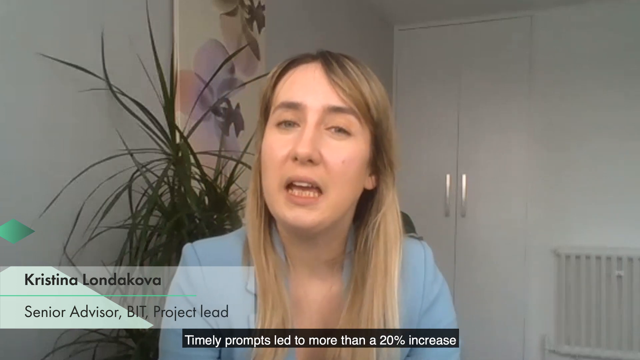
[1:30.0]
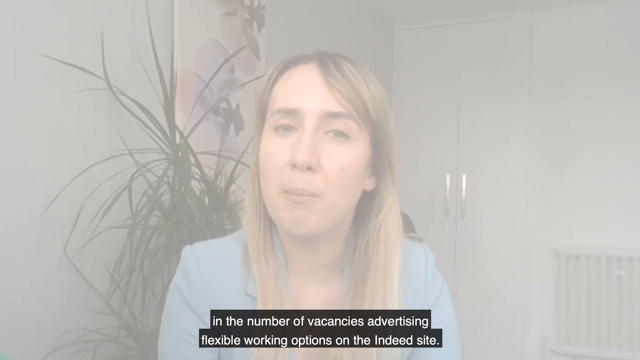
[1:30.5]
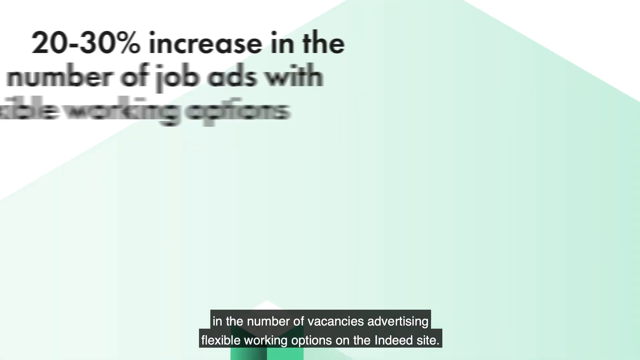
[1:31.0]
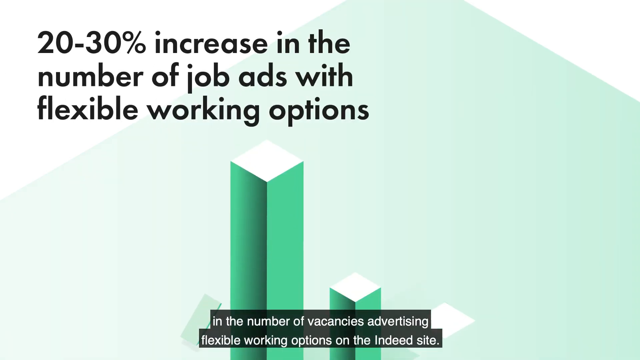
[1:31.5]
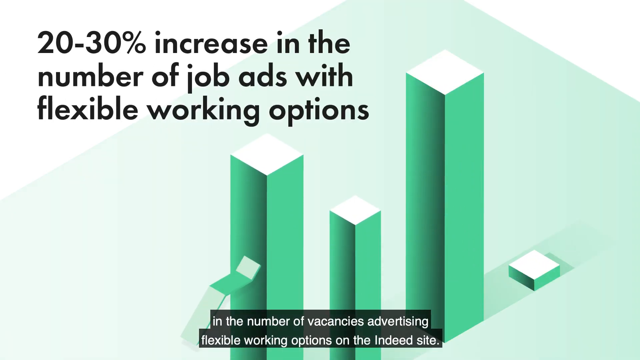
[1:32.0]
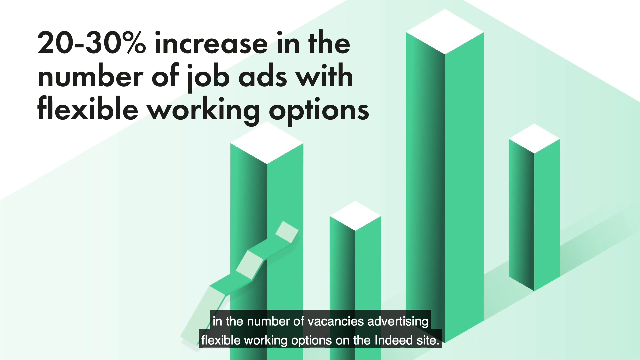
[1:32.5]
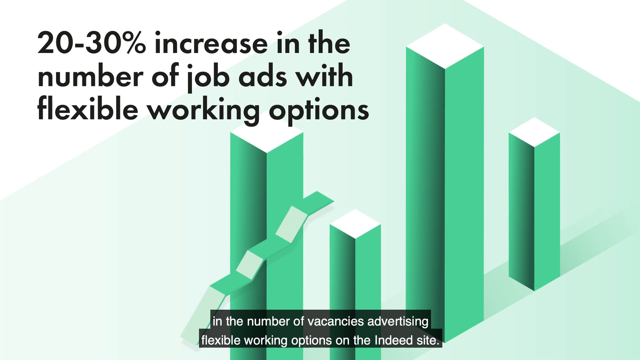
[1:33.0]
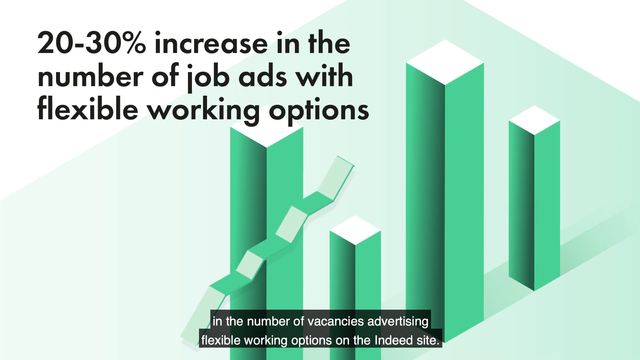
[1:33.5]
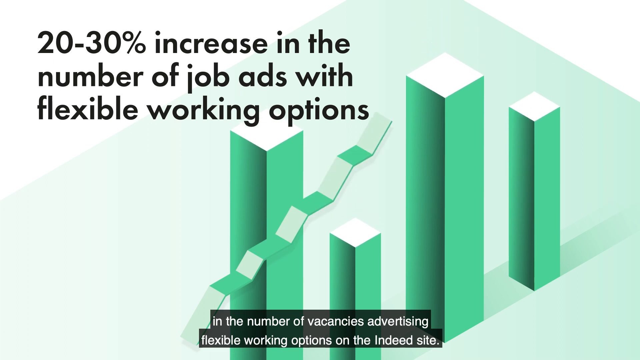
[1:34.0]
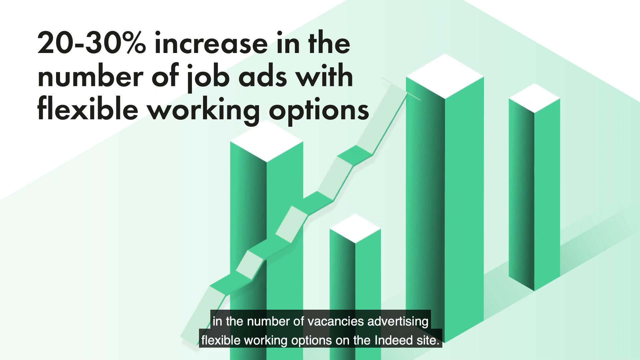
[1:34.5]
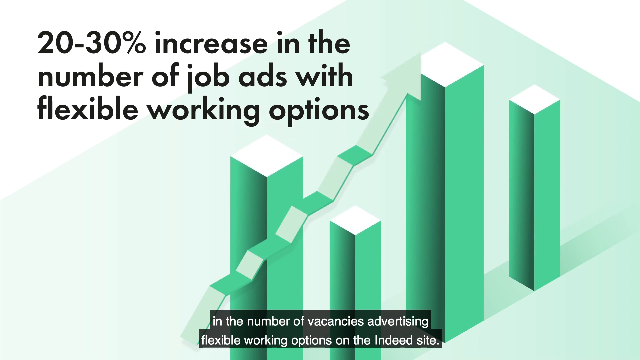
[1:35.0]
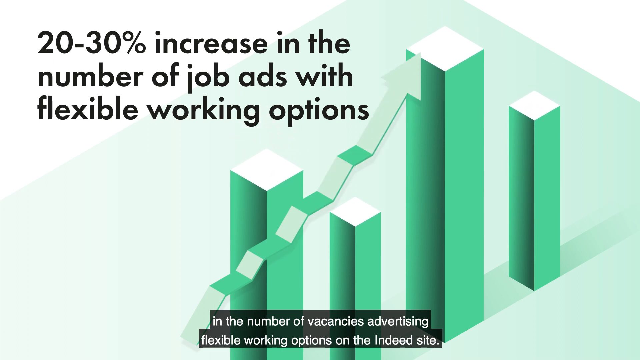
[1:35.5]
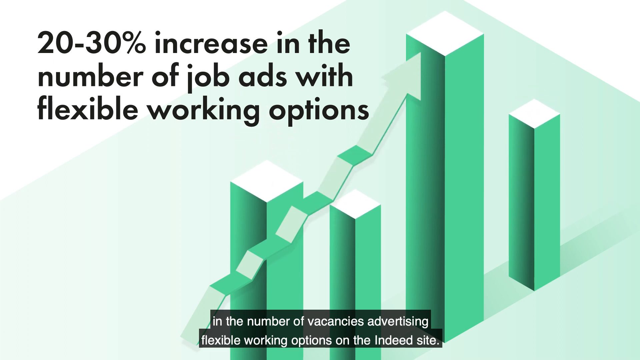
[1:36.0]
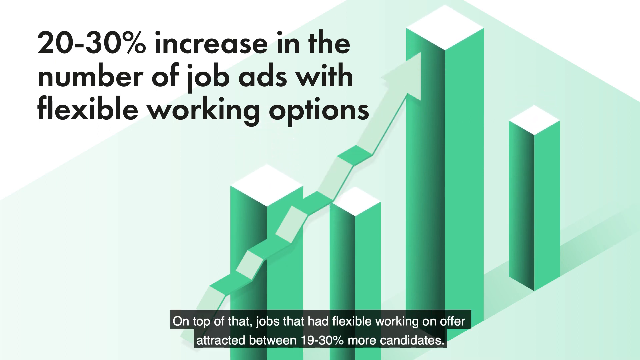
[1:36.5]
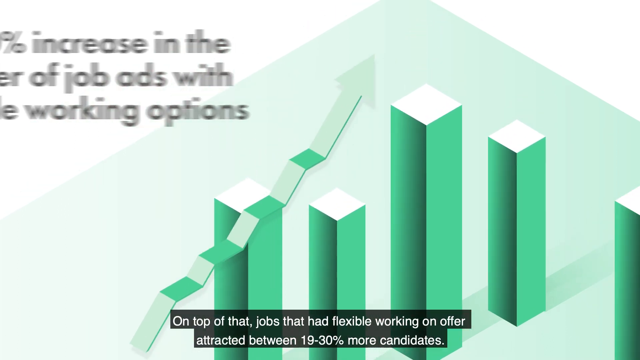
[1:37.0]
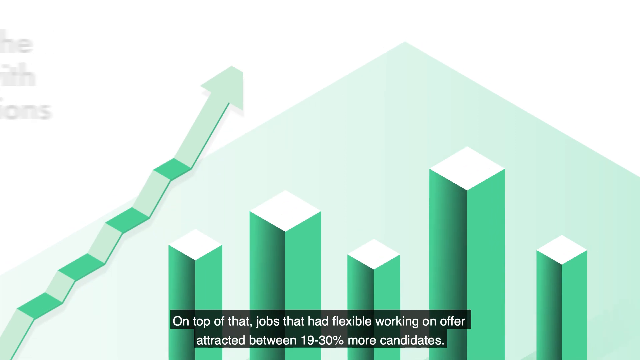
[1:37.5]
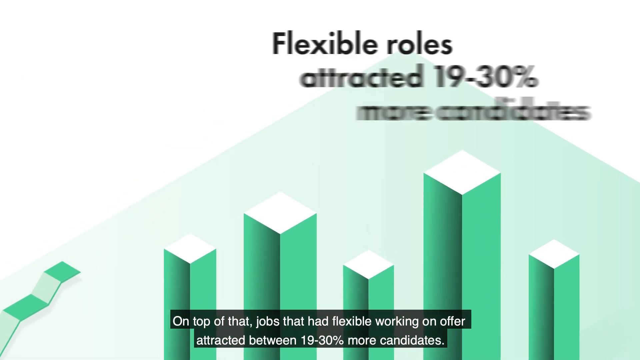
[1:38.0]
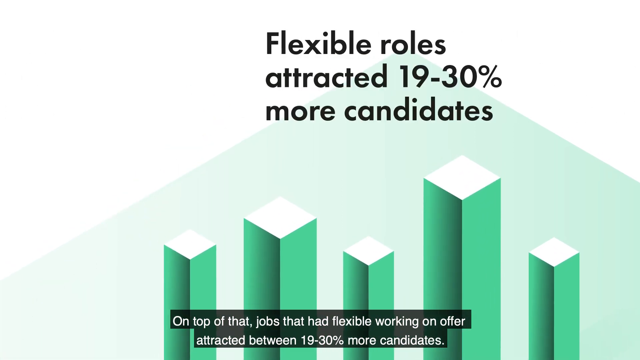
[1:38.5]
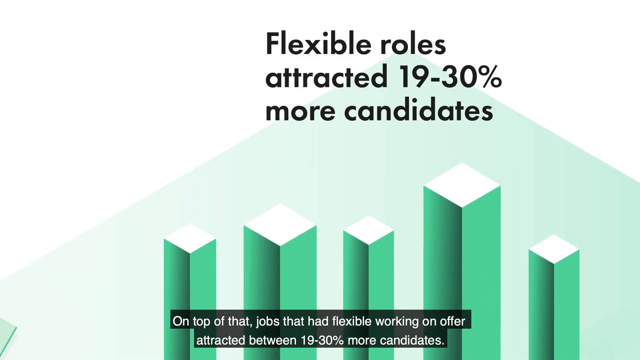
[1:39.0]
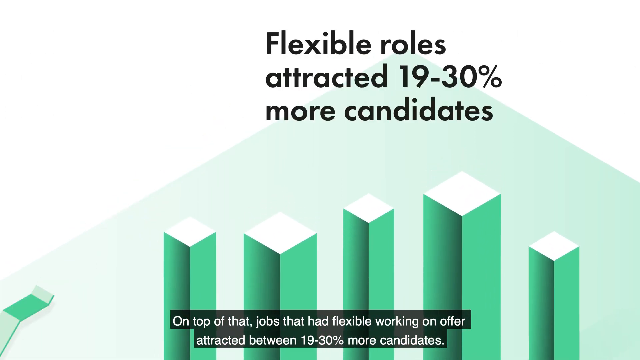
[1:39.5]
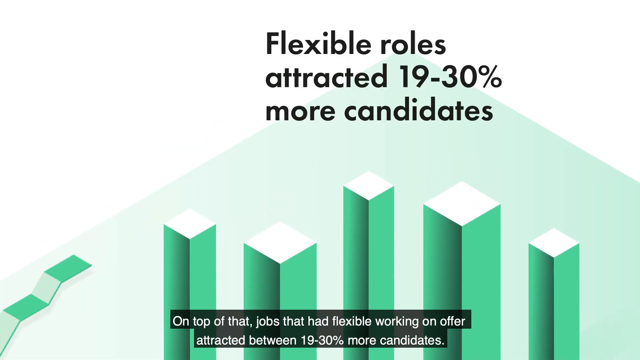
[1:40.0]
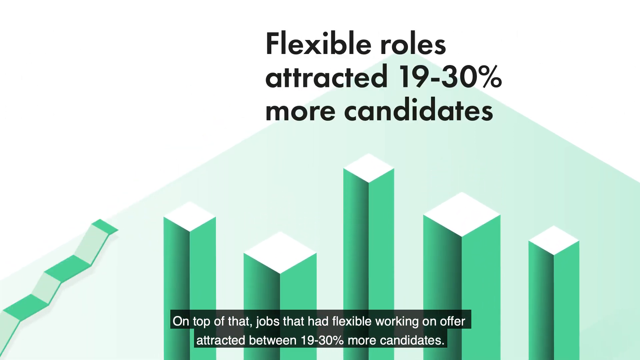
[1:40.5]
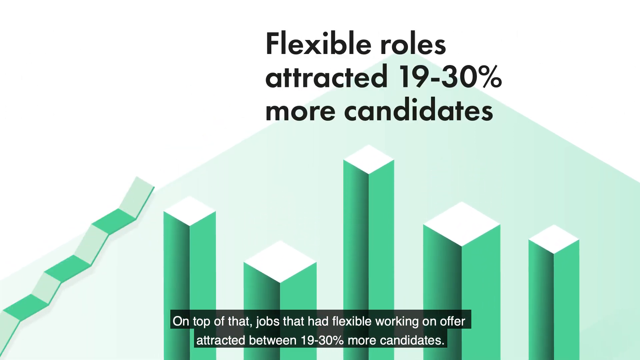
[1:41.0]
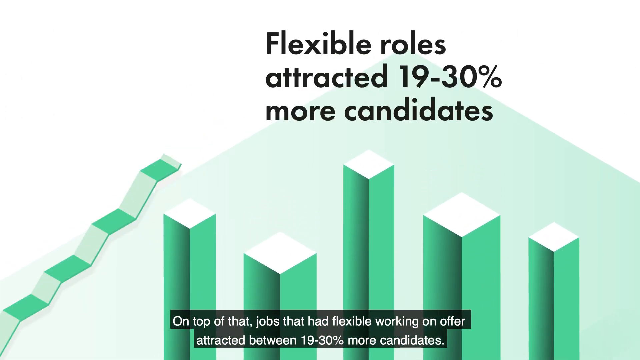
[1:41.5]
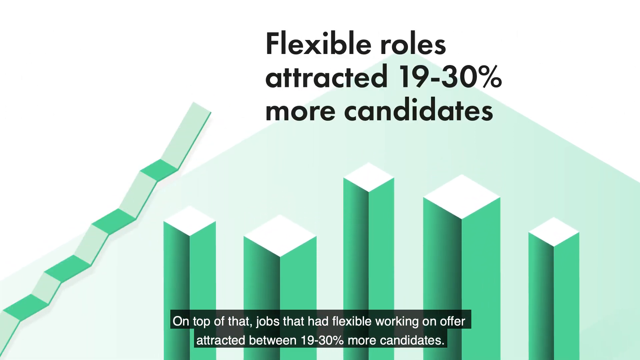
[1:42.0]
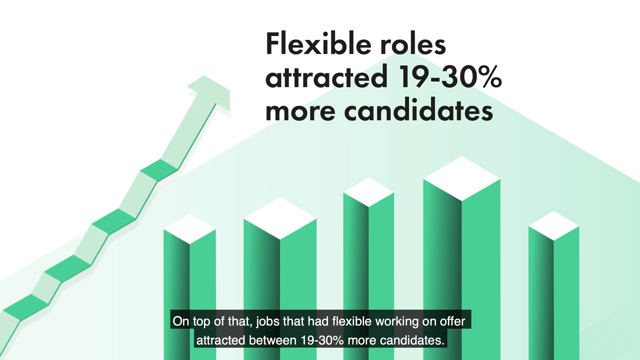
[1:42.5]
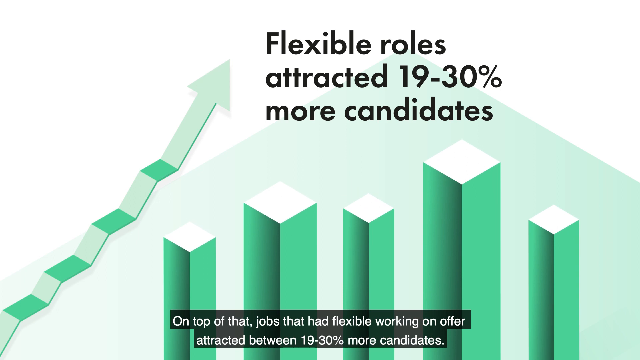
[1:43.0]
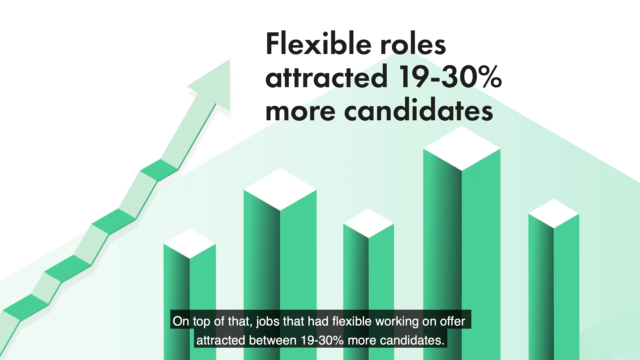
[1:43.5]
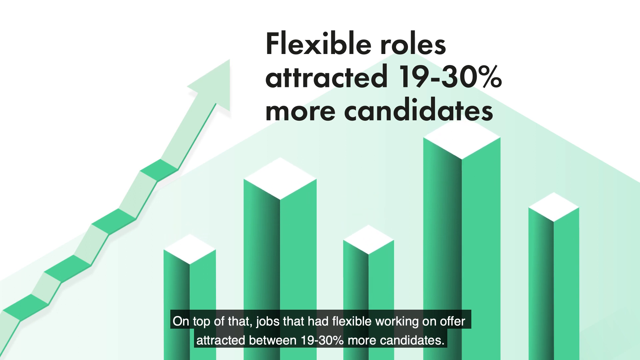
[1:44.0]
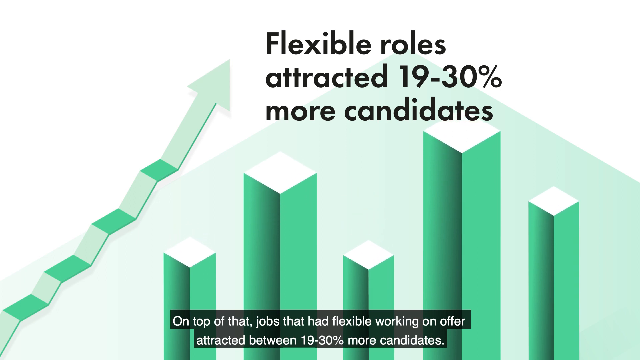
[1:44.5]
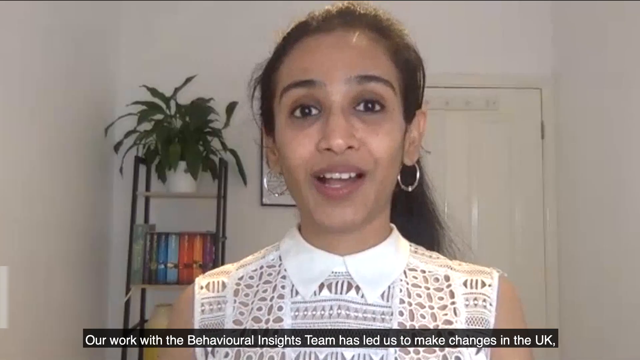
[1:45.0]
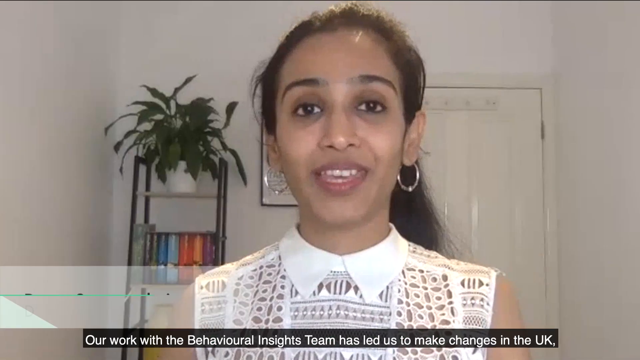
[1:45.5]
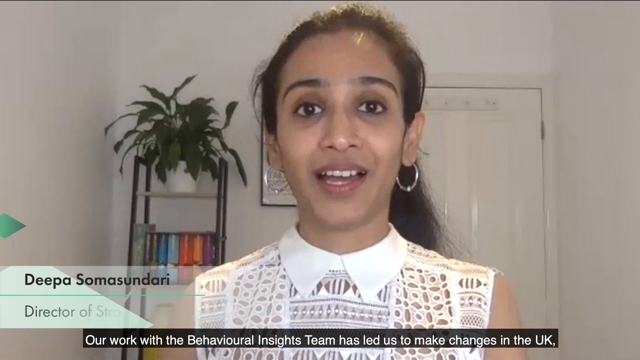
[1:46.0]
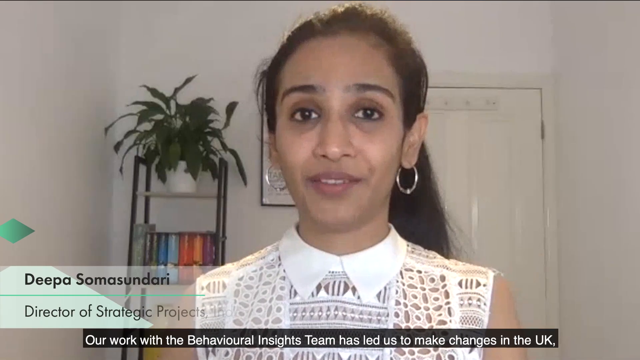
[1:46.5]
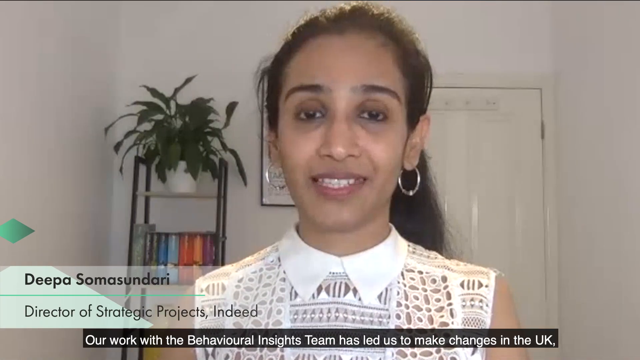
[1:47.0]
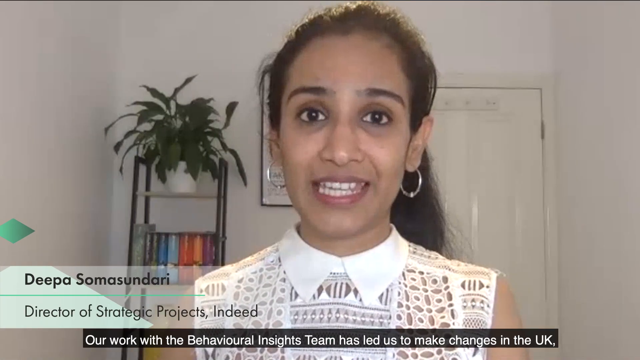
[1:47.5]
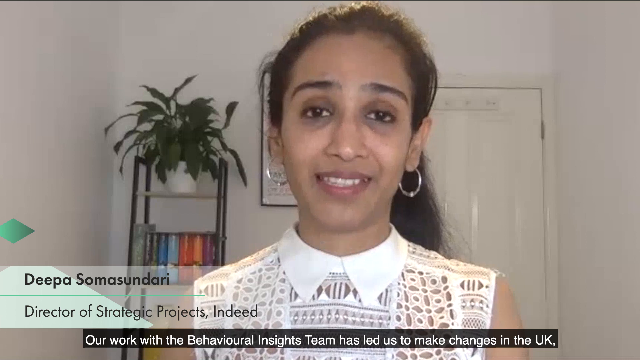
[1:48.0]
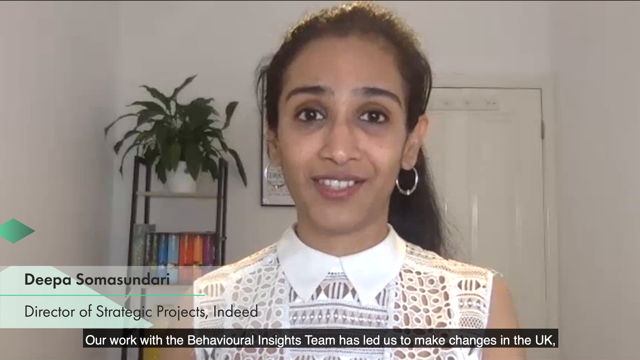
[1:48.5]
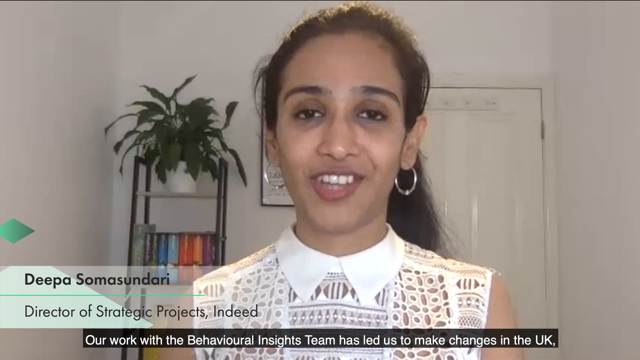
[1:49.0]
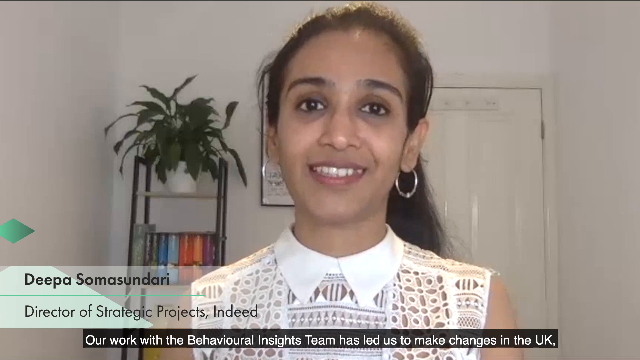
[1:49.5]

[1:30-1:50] The ad appears to be about a trial that Indeed ran. A blonde woman in a blue blazer appears toward the left side of the screen, with her name, Kristina LONDAKOVA, shown on the left as a senior advisor, BIT Project Lead. Behind her are a plant and a picture on the wall, and to the right a radiator. She keeps talking; it looks like there was a 20% to 30% increase in the number of job ads with flexible working options. Green graphics with black font come up, showing moving cartoon graphs very rapidly and a small arrow going up. Text reads "flexible roles attracted 19% to 30% more candidates," and on top of that "jobs had flexible working on offers attracted between 19% and 30% more candidates." Another woman then speaks in the center of the frame. She appears to be of Indian descent and has black hair, thick eyebrows and silver hoop earrings, and wears a white shirt with cutouts. Her name is shown as DEEPA SOMASUNDARI, "Director of Strategic Projects for Indeed." She says they worked with the Behavioral Insights team and that this led them to make changes in the UK.